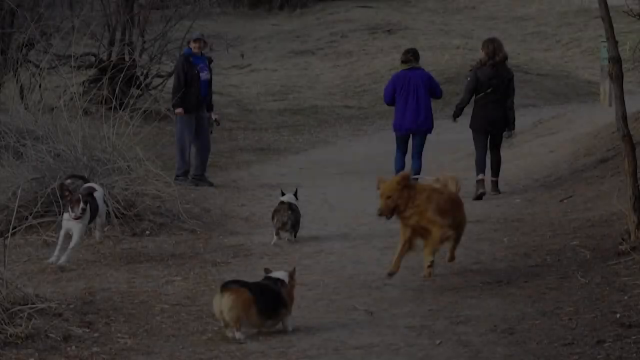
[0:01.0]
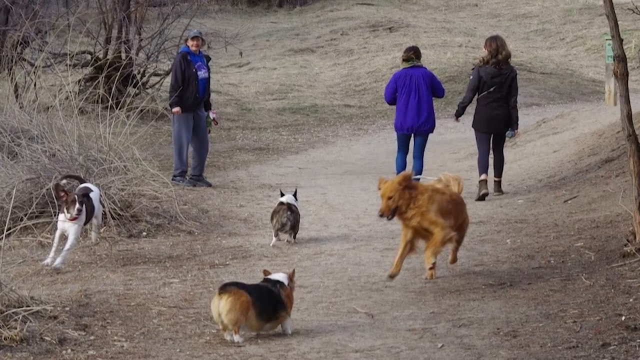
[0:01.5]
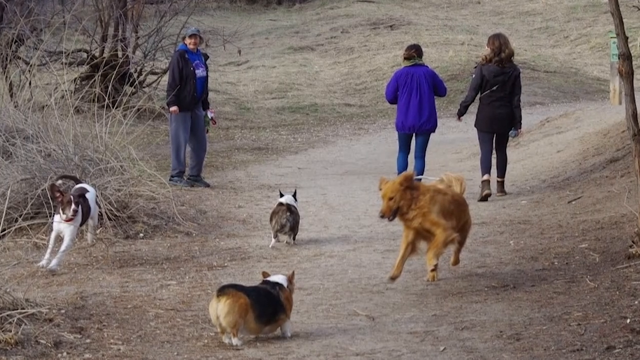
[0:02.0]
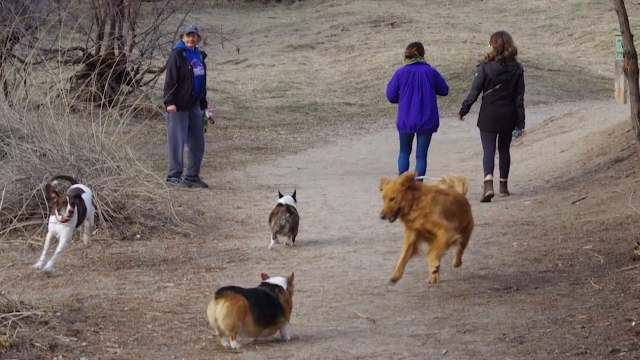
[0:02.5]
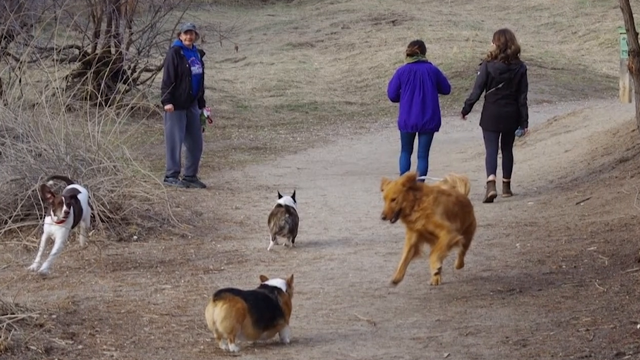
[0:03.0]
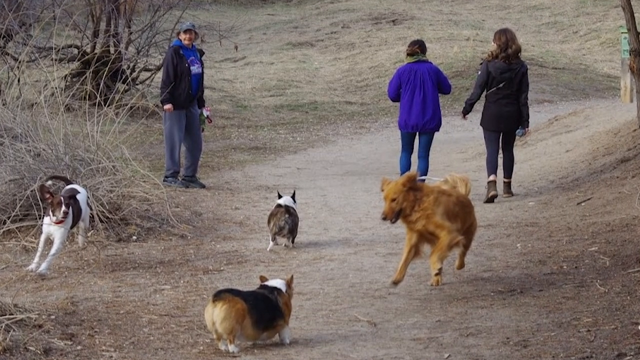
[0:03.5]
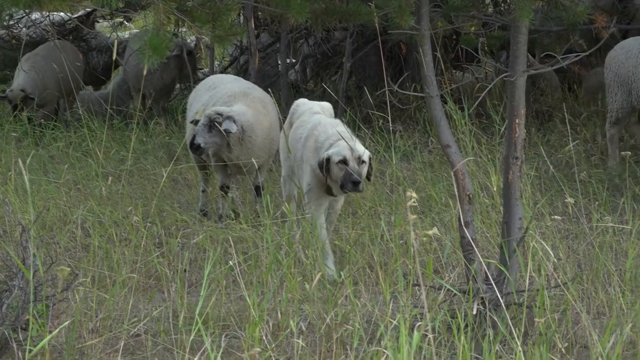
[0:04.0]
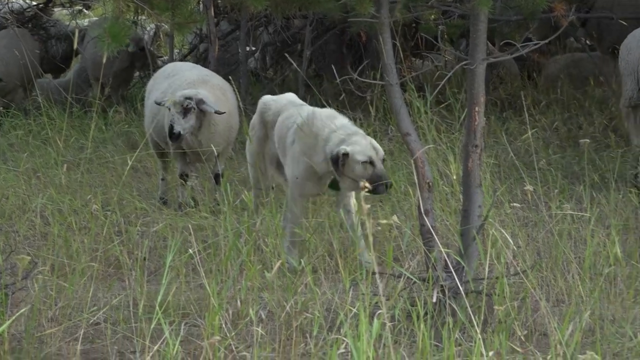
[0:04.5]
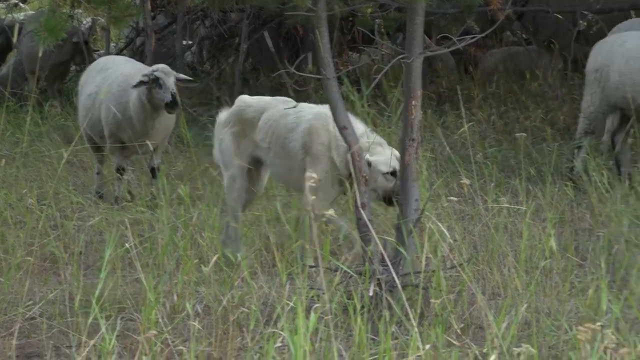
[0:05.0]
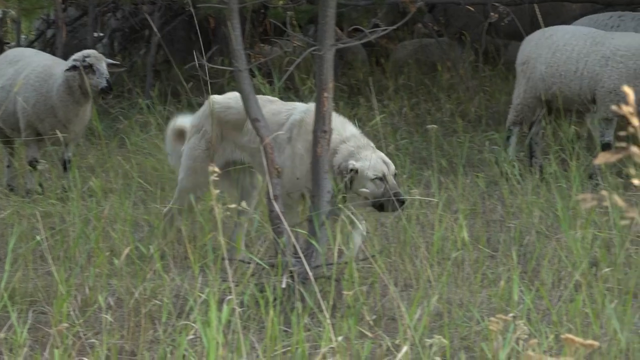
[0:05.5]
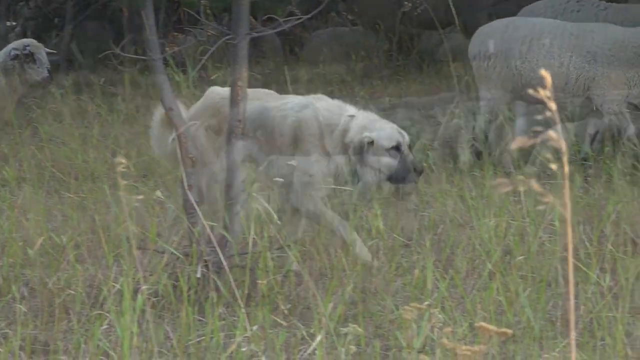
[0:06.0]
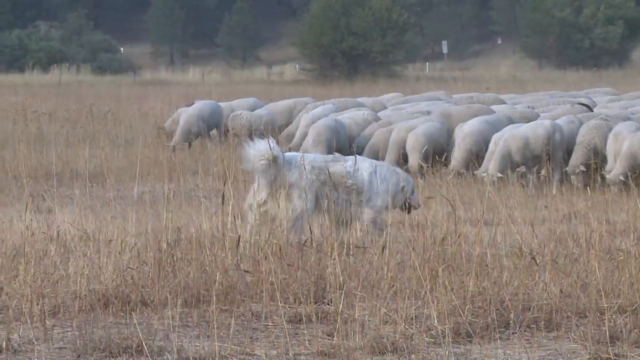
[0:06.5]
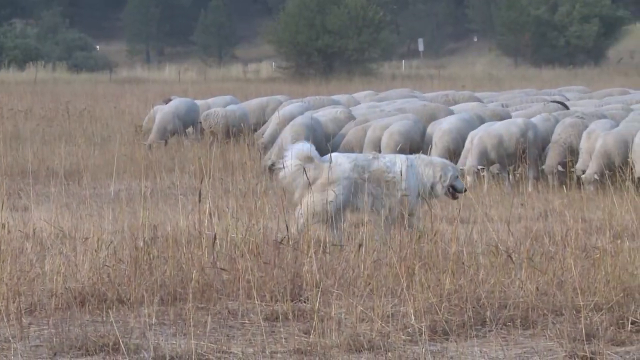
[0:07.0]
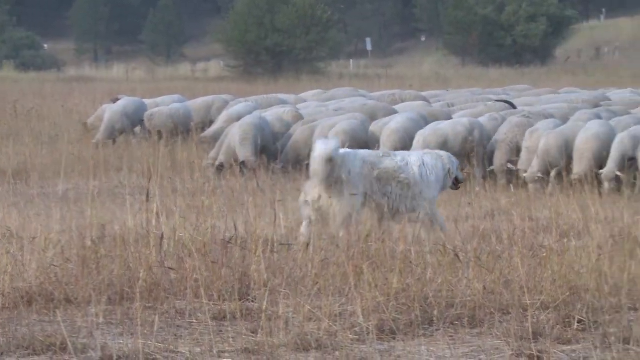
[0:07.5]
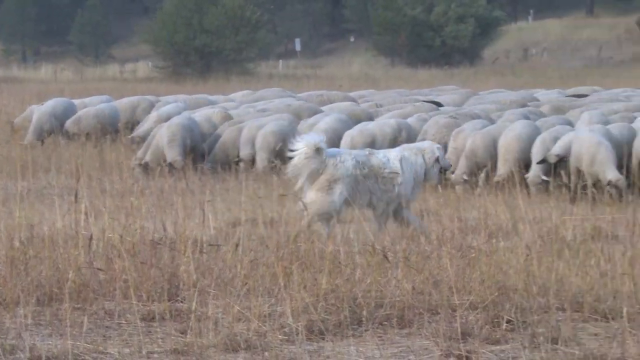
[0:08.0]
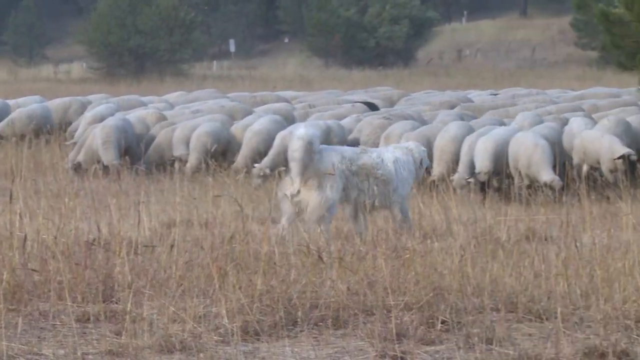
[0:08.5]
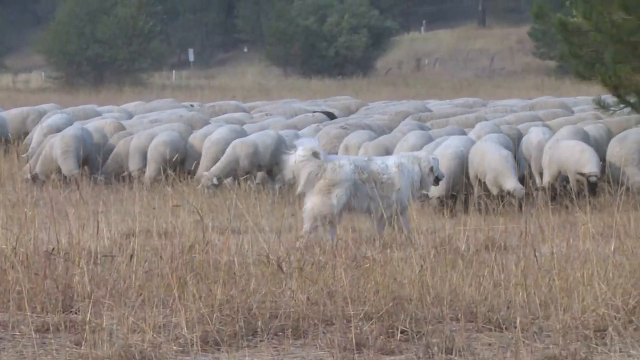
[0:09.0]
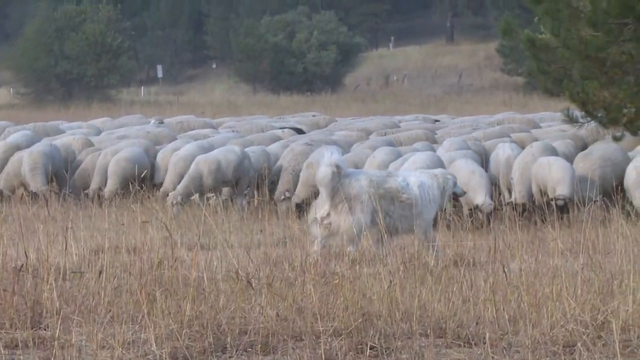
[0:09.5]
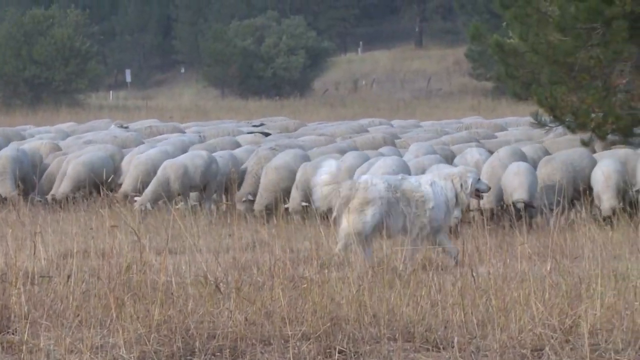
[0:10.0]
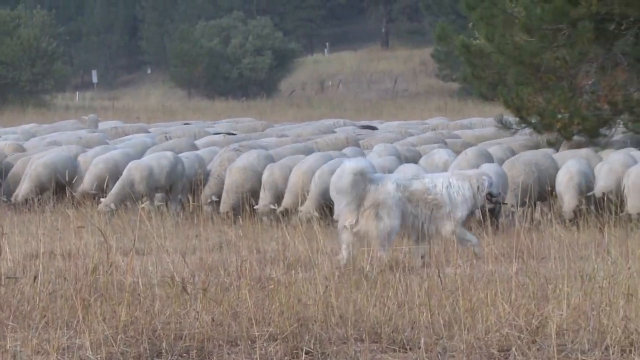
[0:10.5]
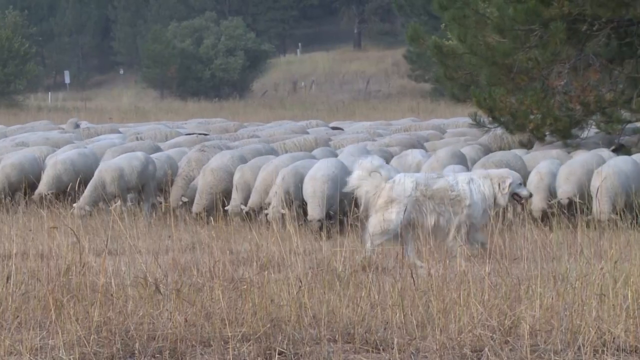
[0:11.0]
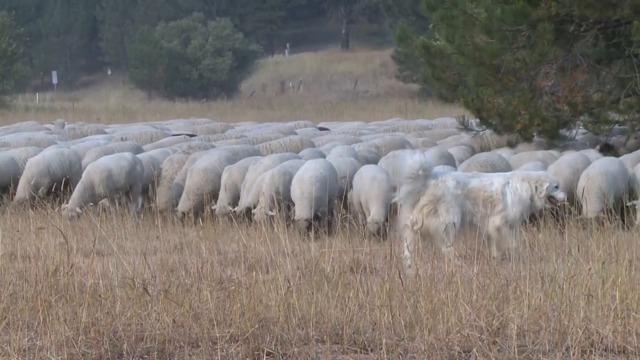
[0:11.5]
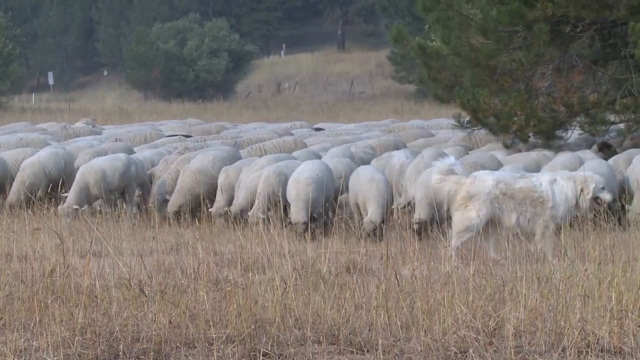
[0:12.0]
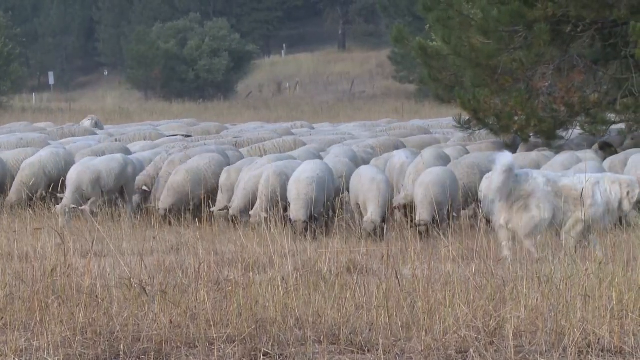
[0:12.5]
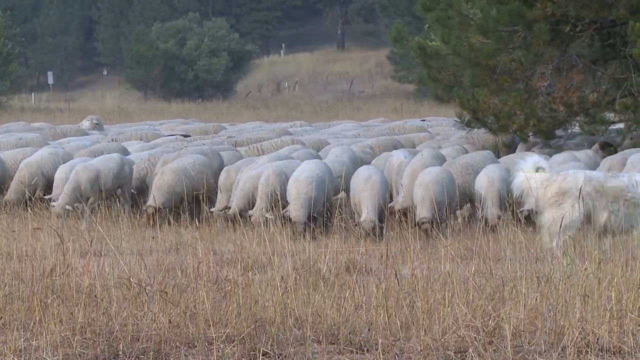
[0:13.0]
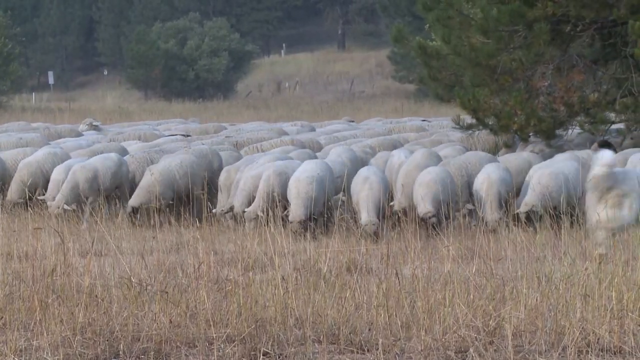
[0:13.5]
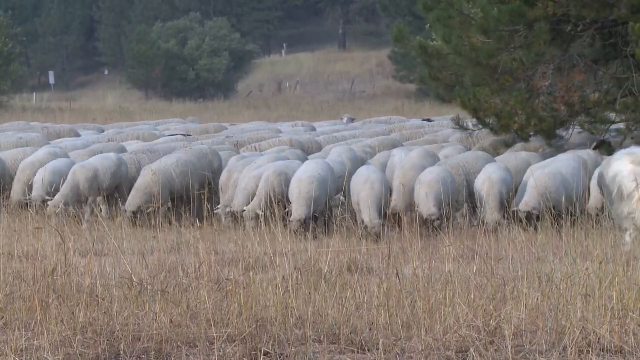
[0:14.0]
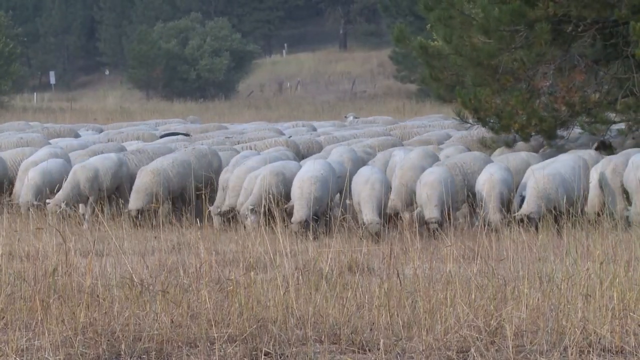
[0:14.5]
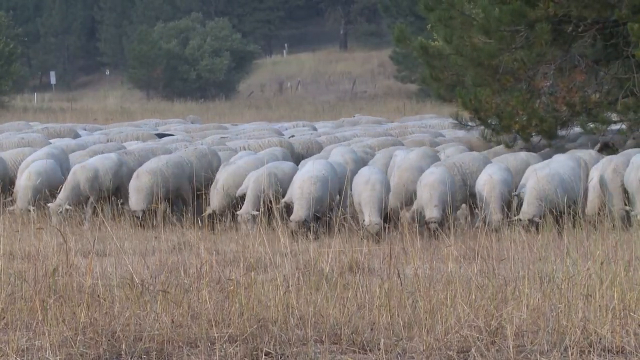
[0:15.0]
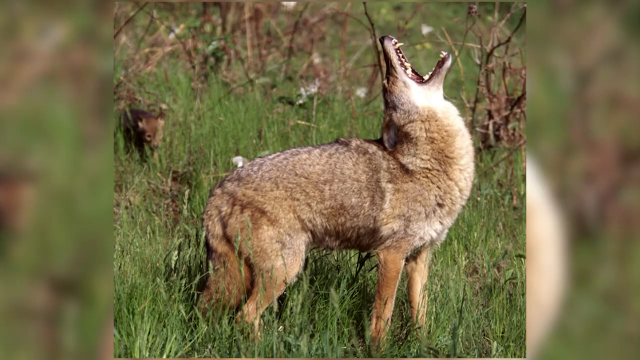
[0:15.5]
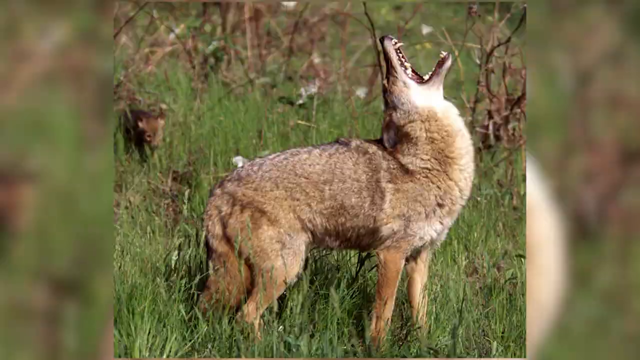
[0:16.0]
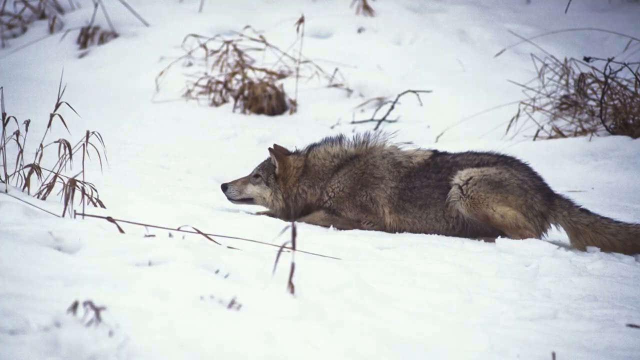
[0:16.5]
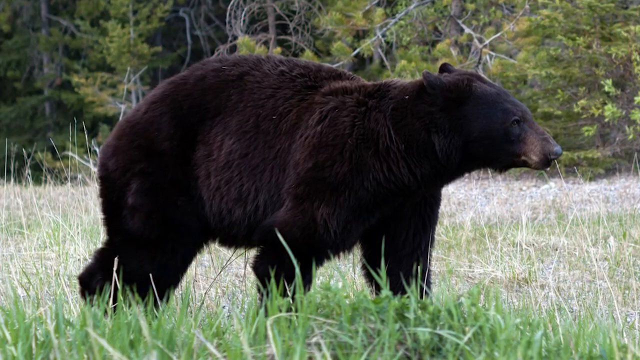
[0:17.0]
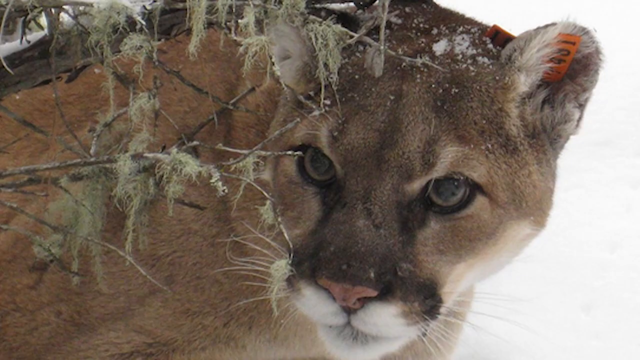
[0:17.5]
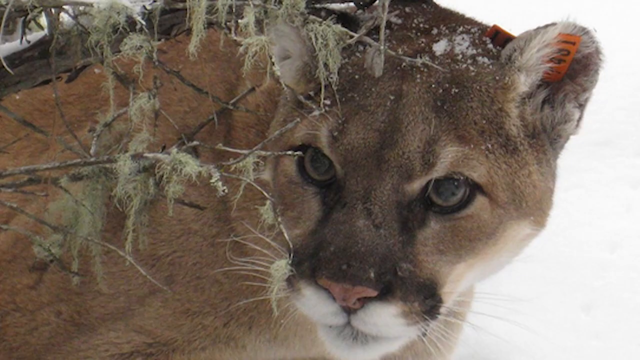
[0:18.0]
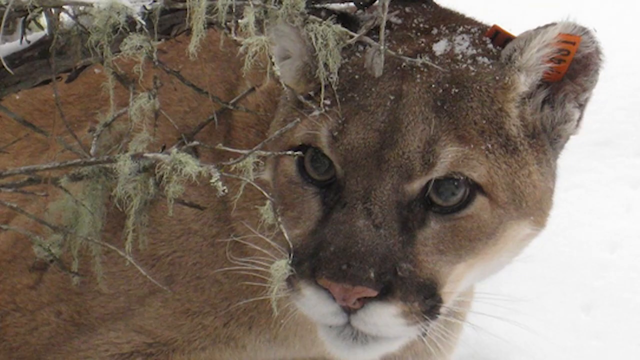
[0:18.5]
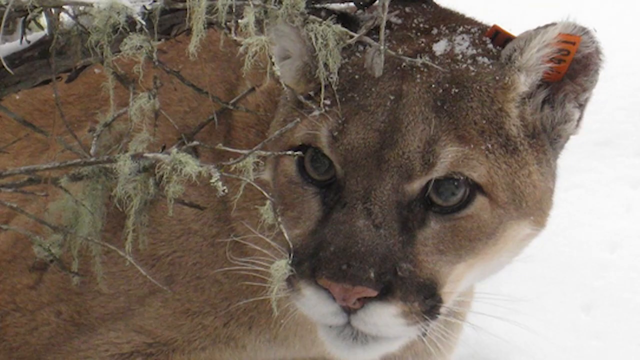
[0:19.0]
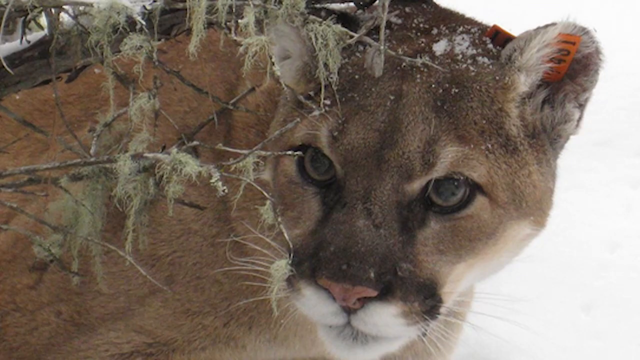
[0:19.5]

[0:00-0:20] Three people and four dogs take a walk in a very dry field where everything, the trees and the grass, is dry. One lady wears all blue, another wears all black and has long hair, and another lady wears a blue jacket, dark pants, and a black jacket with a cap. Of the four dogs, one is brown, and all the dogs are behind the people. In another field, white sheep graze, and one guard dog monitors the whole situation; there appear to be hundreds of sheep in the field, all white. A wolf is in a field with green grass, opening its mouth wide, apparently calling others, and another wolf lies down.